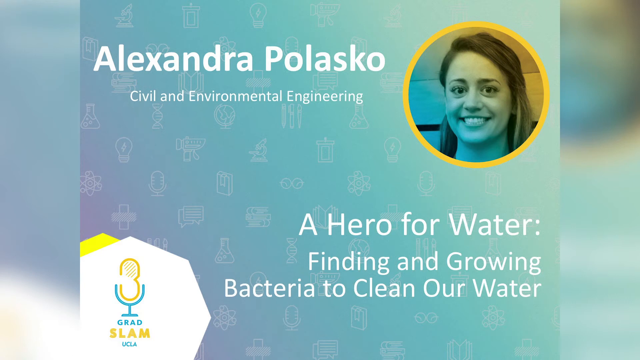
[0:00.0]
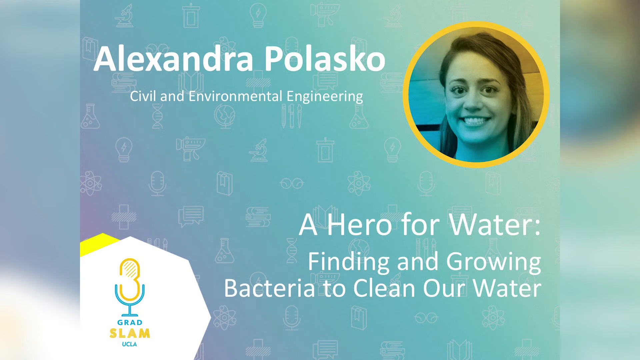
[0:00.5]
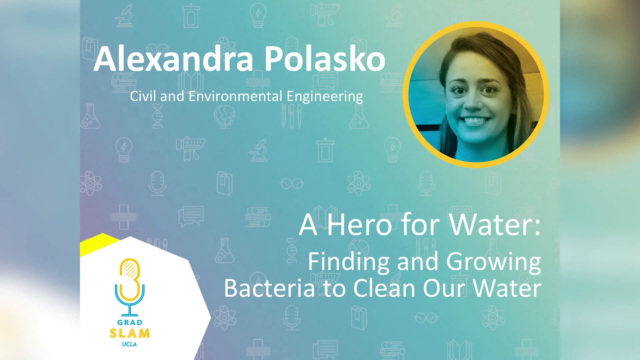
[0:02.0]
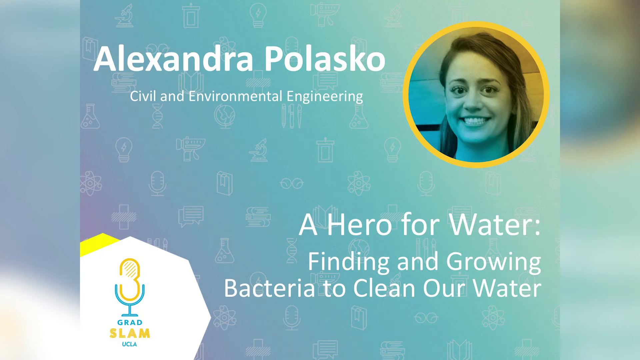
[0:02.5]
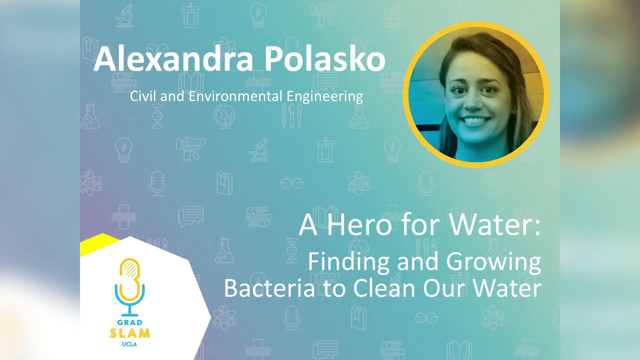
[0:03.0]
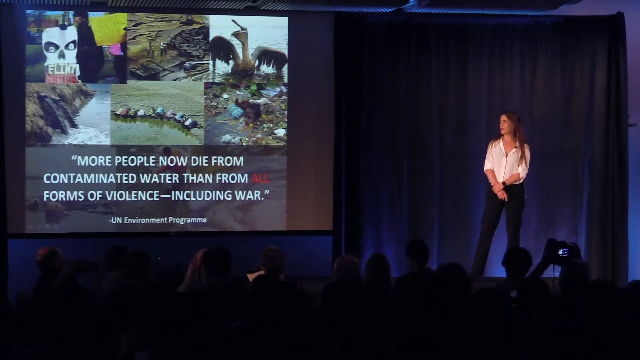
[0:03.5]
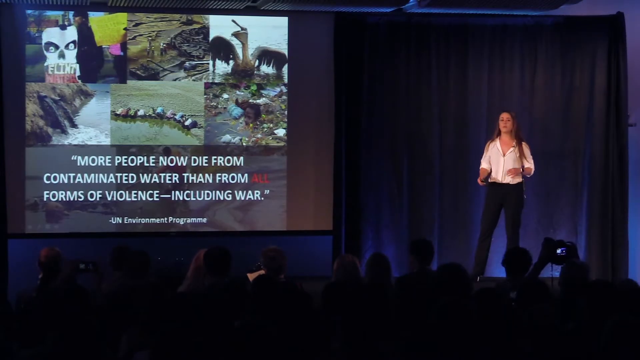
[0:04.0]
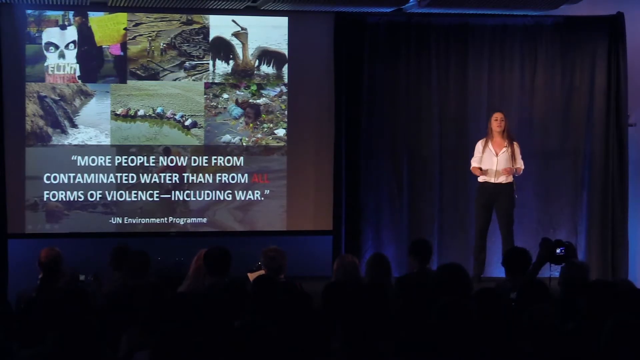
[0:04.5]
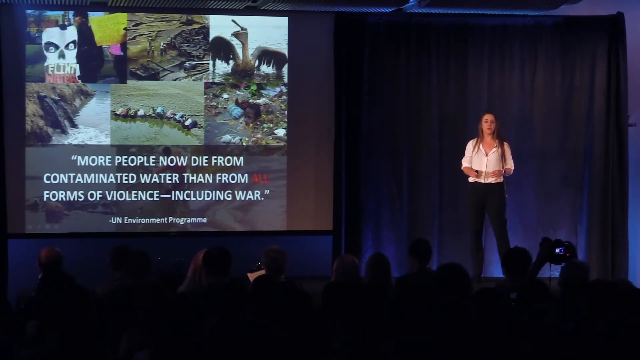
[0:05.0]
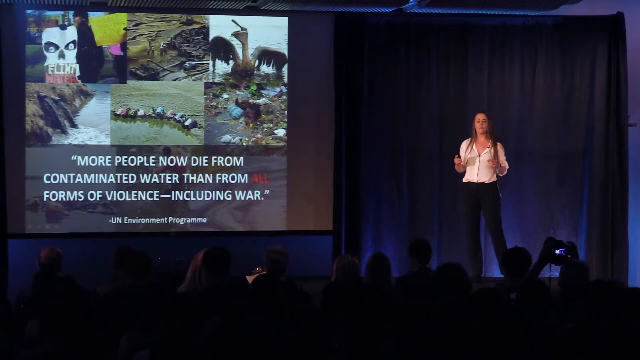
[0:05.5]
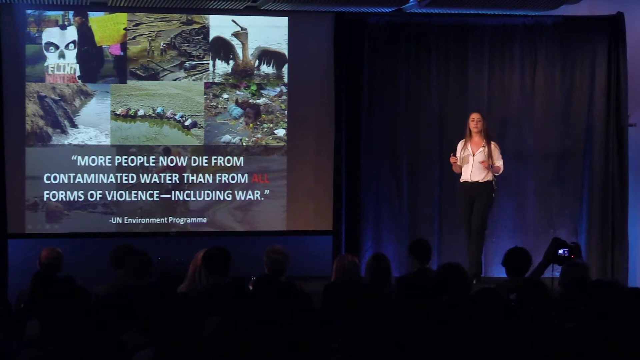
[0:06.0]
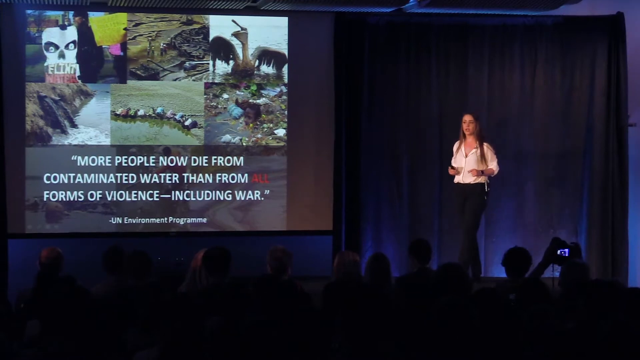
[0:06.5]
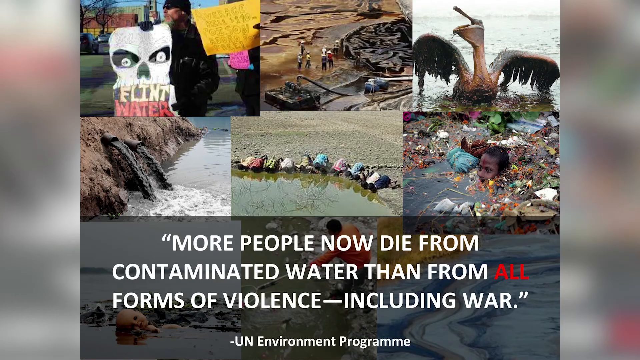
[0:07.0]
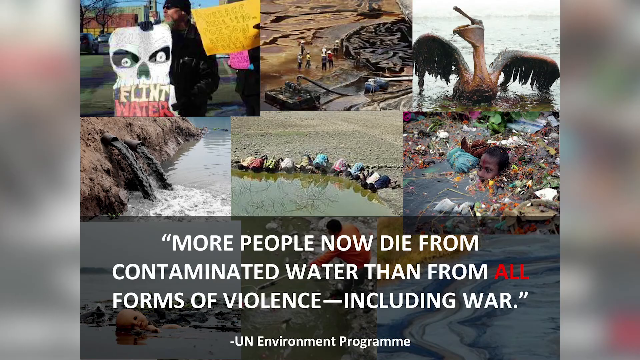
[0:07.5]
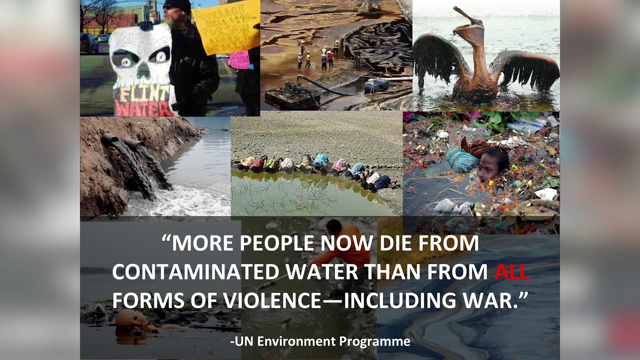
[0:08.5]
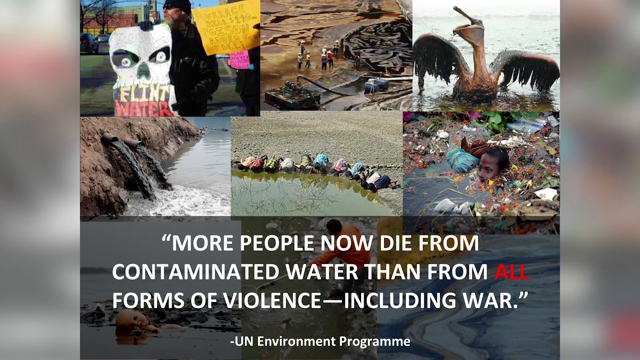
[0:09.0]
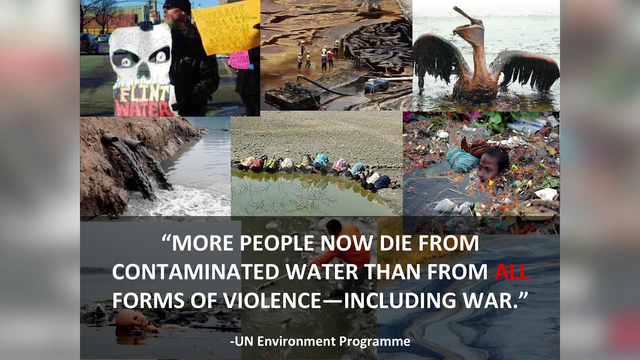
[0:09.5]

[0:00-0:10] The video appears to be a science video, possibly a TED Talk-type setup. It opens on a background mixing teal, white and lavender, with various graphics on it such as light bulbs and microphones. White text reads "Alexandra Polasko, civil and environmental engineering." To the right of that is a yellow circle containing a woman's face. Below, more white text says "a hero for water, finding and growing bacteria to clean our water," and to the left of it is a small microphone icon. The video then moves to an image of a woman on stage, visible toward the right. She wears a white dress shirt, black slacks and a watch. To her left is a projection screen with various images and white text reading "more people now die from contaminated water than from all forms of violence, including war." Audience members are in the foreground, and toward the right a person is recording with a camera. The woman paces the stage as she talks, very animated with her hands, bringing them up and putting them back down. The view then moves to a close-up of what was on the projection screen: about nine images. A man holds a skull sign that says "Flint water"; some people who look like engineers are possibly digging wells; a bird is covered in oil; sludge comes out of pipes; a group of what look like malnourished children are around a puddle of water; a kid is in a dirty pile of water; children's toys float in water; a man in an orange shirt uses a net to fish things from the water; and some water appears to have trash in it. Together they form a series of doomsday-type images.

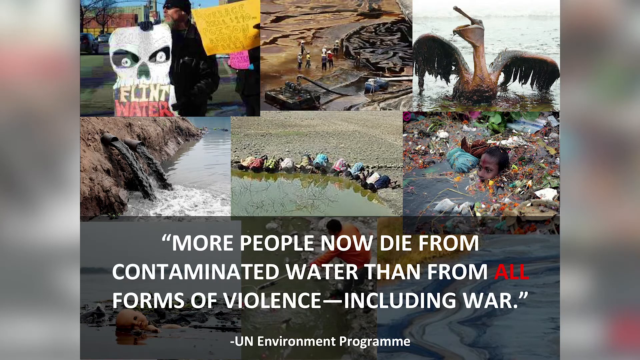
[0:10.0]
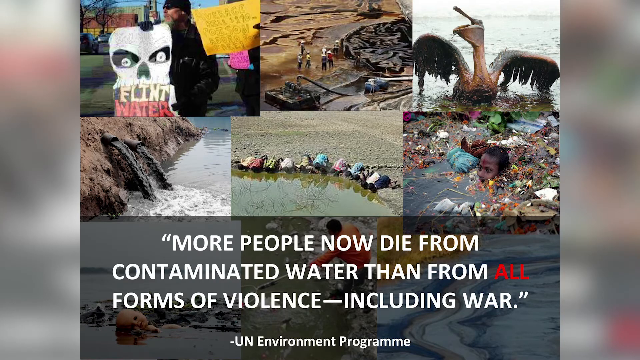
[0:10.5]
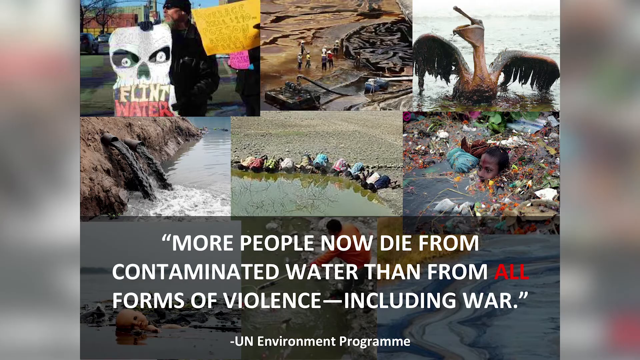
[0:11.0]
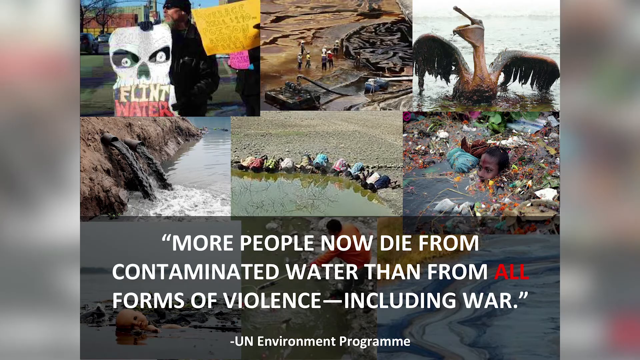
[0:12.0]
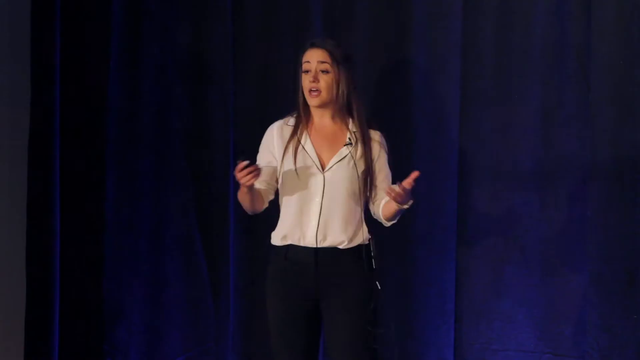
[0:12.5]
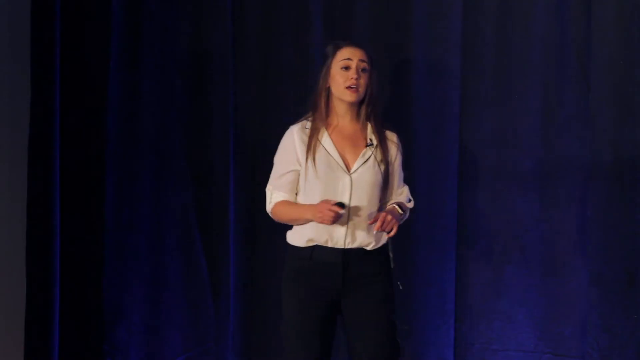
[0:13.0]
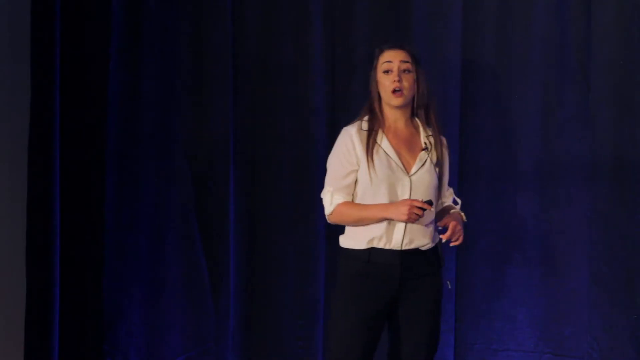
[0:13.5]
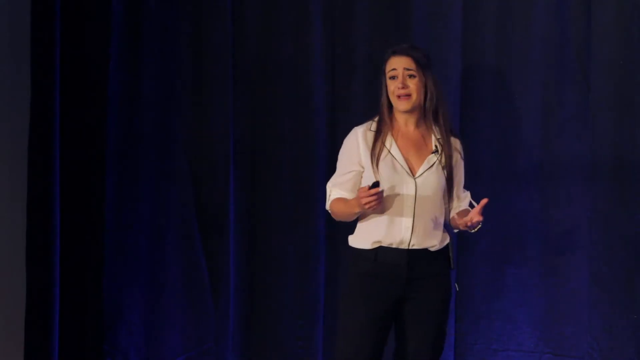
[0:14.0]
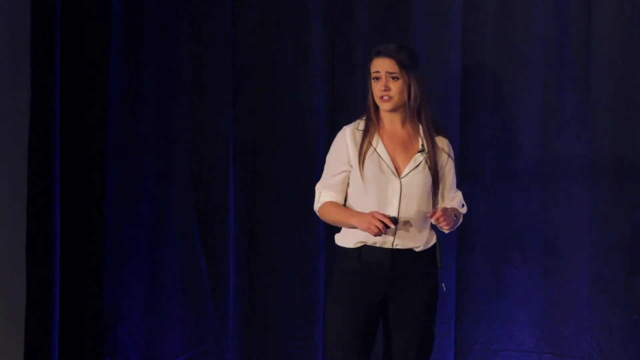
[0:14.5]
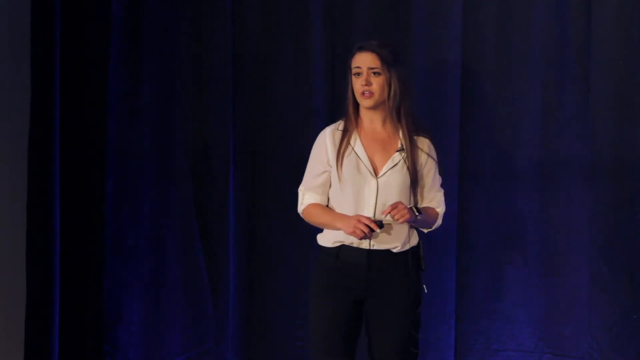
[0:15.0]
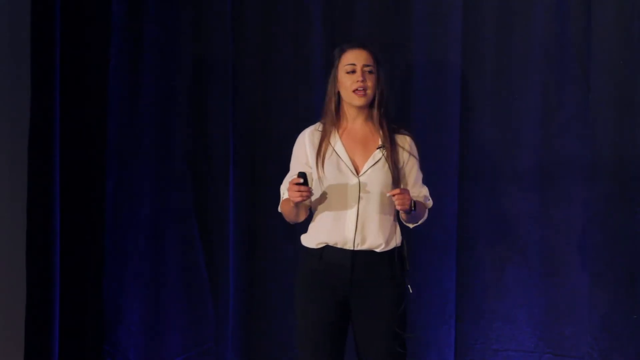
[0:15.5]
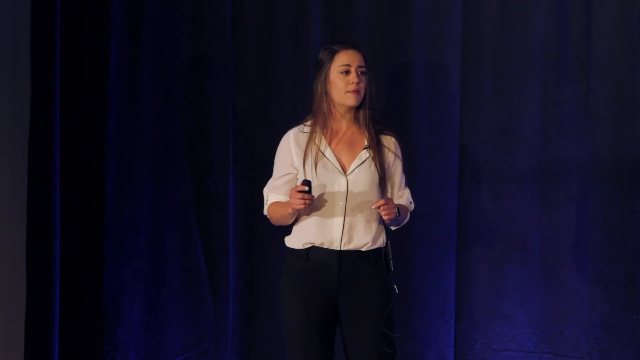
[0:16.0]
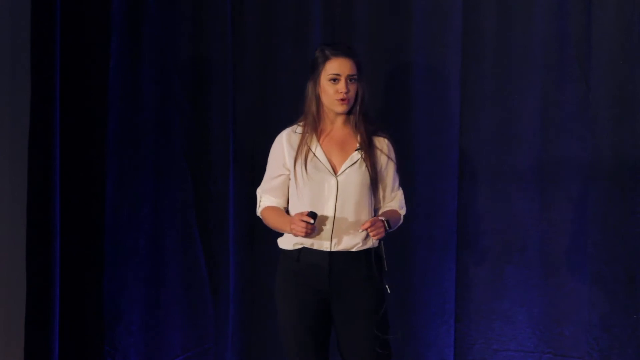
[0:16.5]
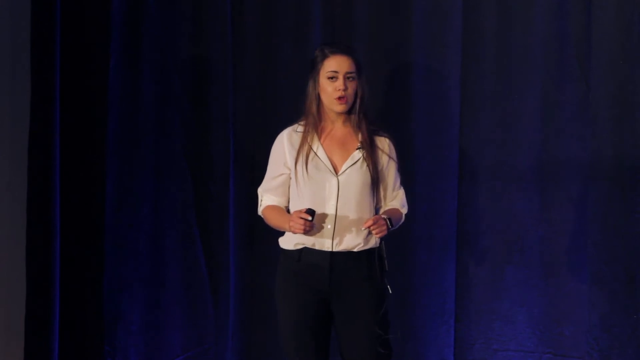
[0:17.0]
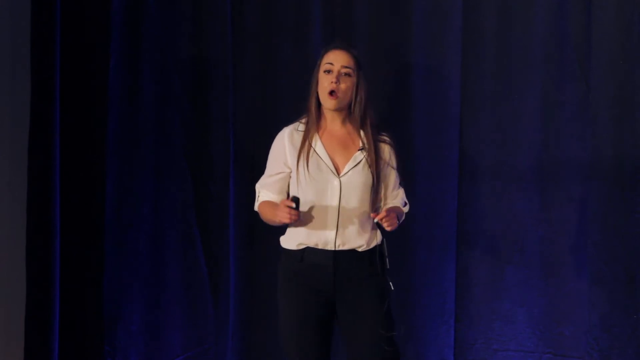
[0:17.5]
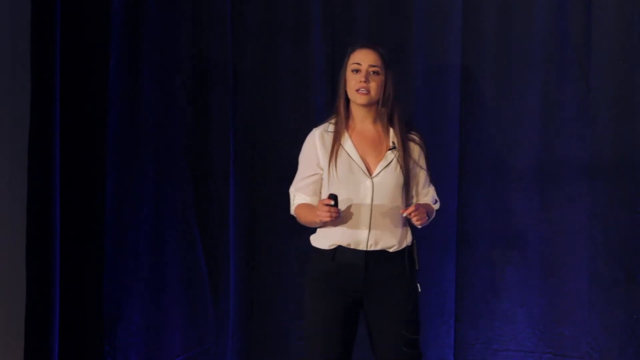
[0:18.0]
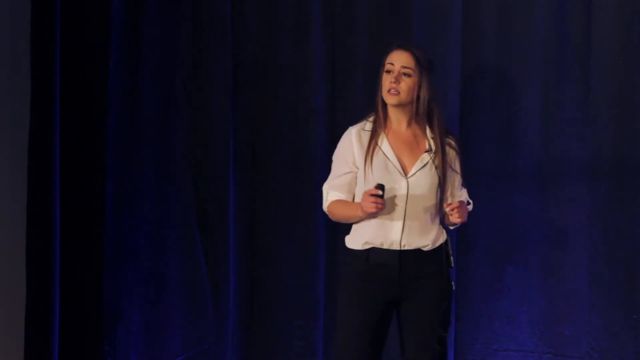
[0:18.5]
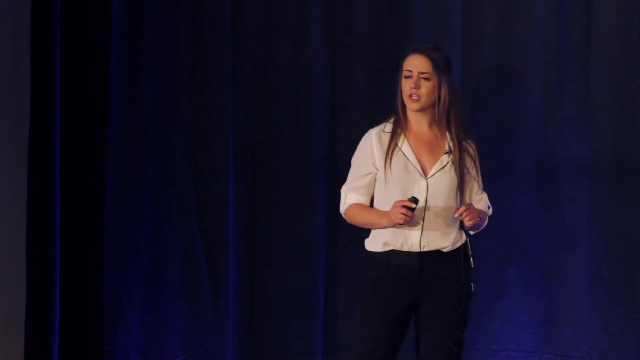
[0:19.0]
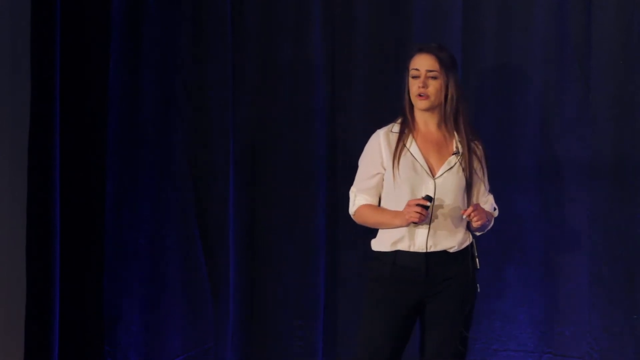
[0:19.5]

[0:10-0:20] In what looks like a TED Talk-type presentation, the shot opens on a series of doomsday-style images, apparently about nine of them. A man dressed in black holds a skull sign that says "Flint water." What look like engineers in hard hats are huddled around some sort of drainage system or giant well. A bird is covered in oil. Black sludge comes out of pipes into water. A group of children is gathered around a puddle of water that looks green. Another image shows a child floating in dirty trash water; another shows children's toys in water; a man in an orange shirt uses a net to fish something out; and another image appears to show trash in water. A quote in white says "more people now die from contaminated water than from all forms of violence, including war," attributed to "UN Environment Program." The view lingers on this, then shows a speaker on stage: a young woman who looks perhaps in her 30s, in a white dress shirt and black slacks, apparently wearing a smartwatch. A blue curtain is visible behind her. A black microphone is clipped to her lapel, and in one hand she holds a black clicker that looks like it controls the projector. She has long brown hair, part of it behind her and part draped over her shirt. She speaks very animatedly and looks like she is looking out into the crowd, leaning forward as if to emphasize certain words; her body language appears very passionate.